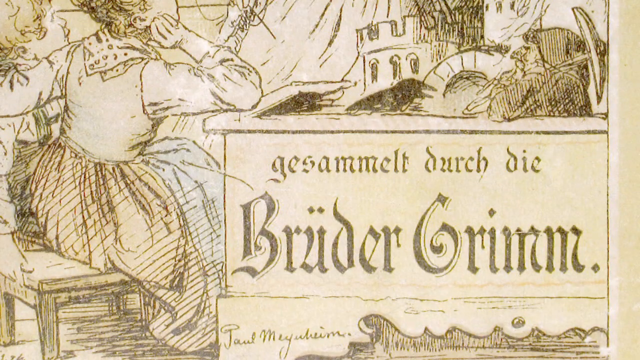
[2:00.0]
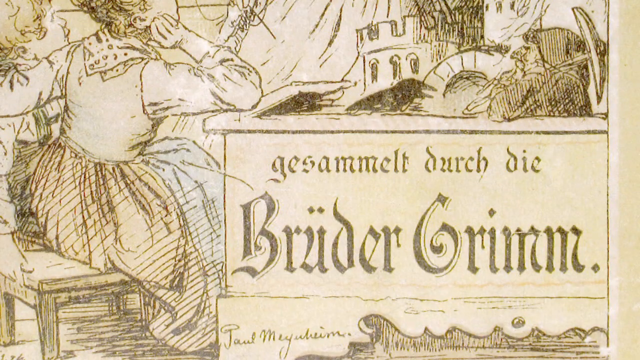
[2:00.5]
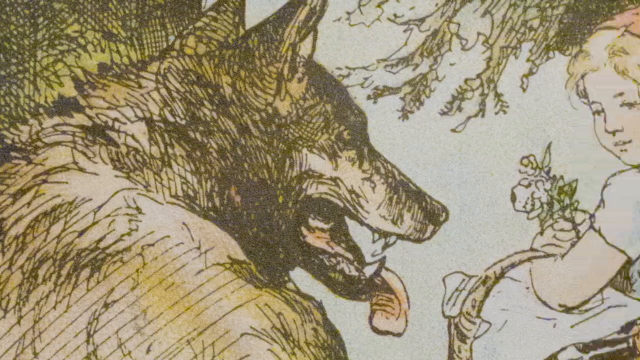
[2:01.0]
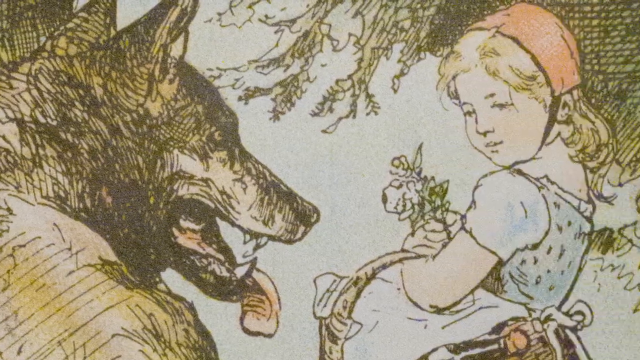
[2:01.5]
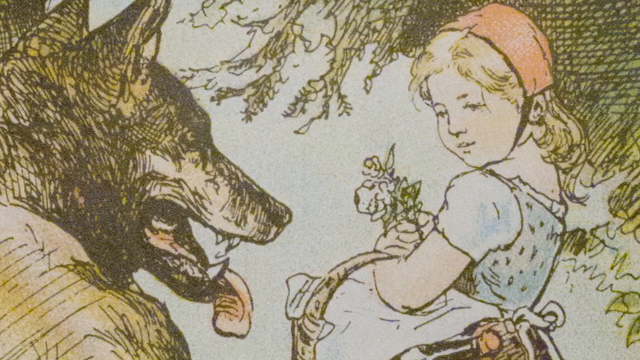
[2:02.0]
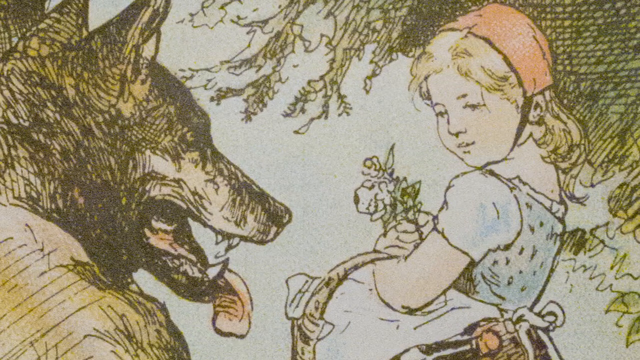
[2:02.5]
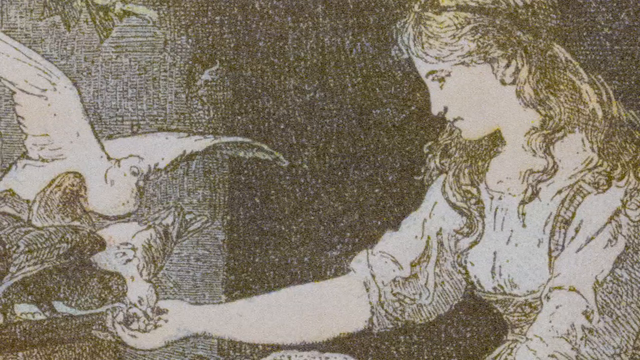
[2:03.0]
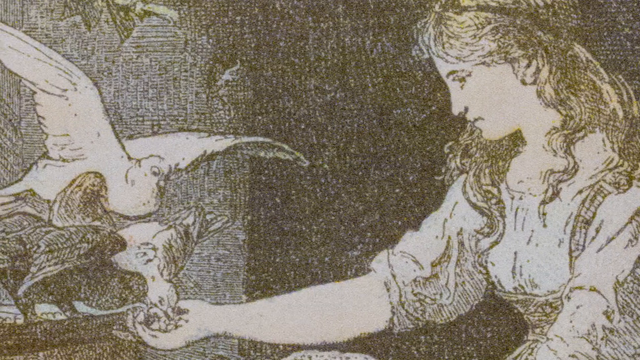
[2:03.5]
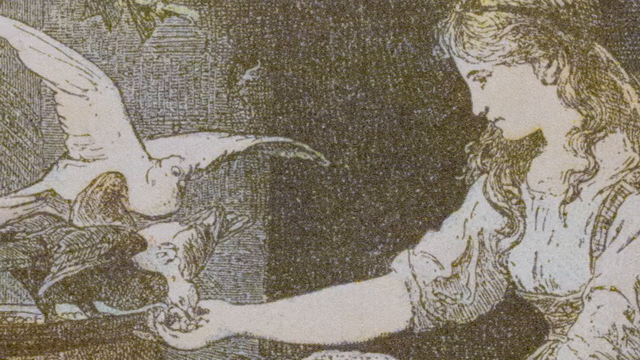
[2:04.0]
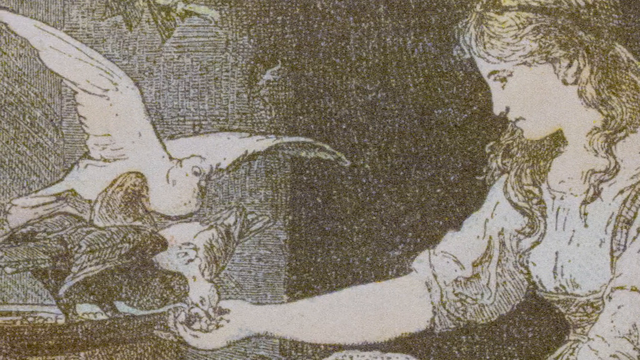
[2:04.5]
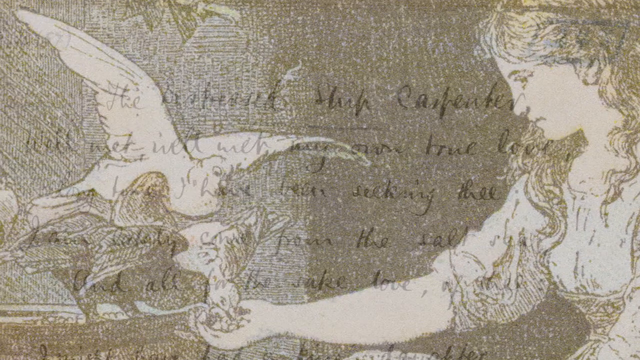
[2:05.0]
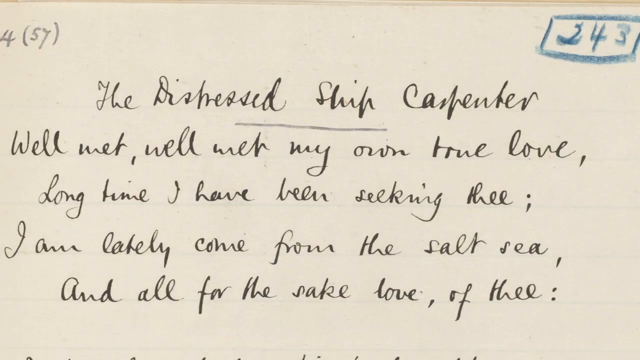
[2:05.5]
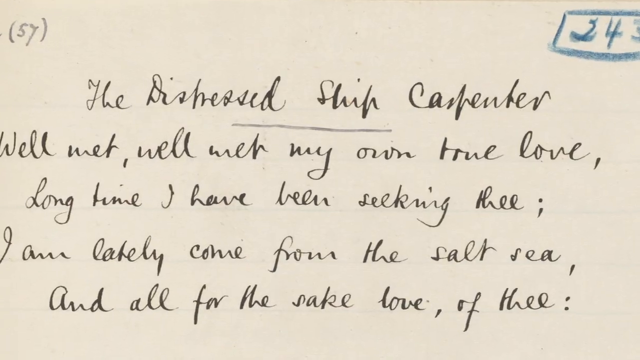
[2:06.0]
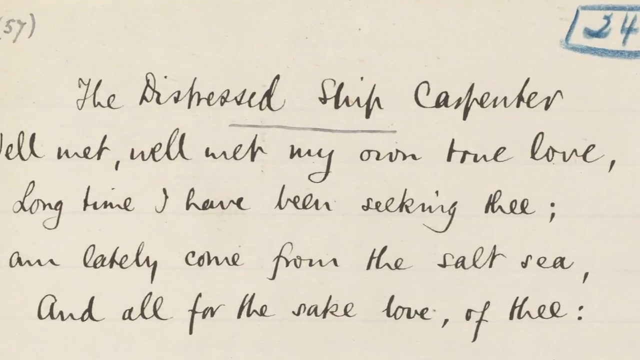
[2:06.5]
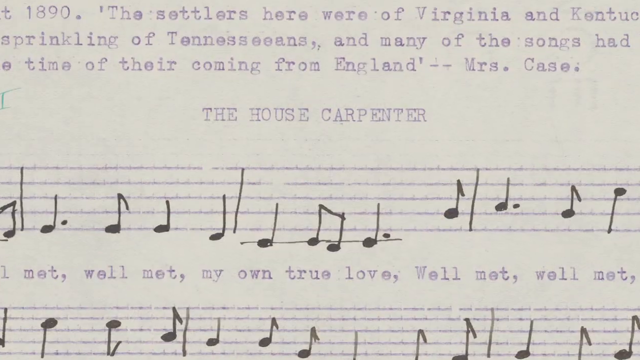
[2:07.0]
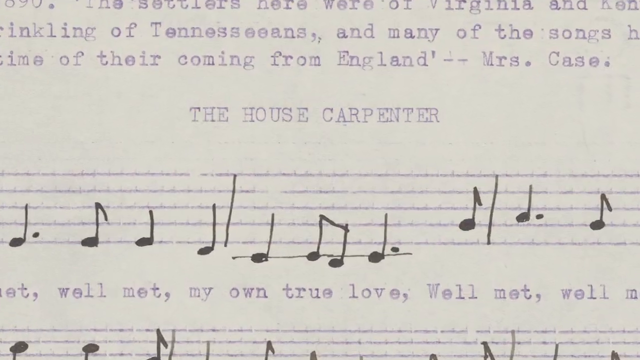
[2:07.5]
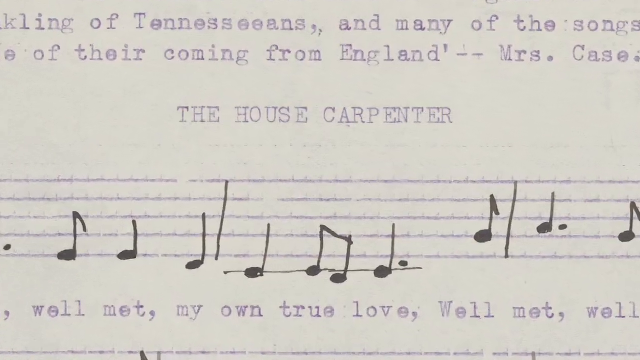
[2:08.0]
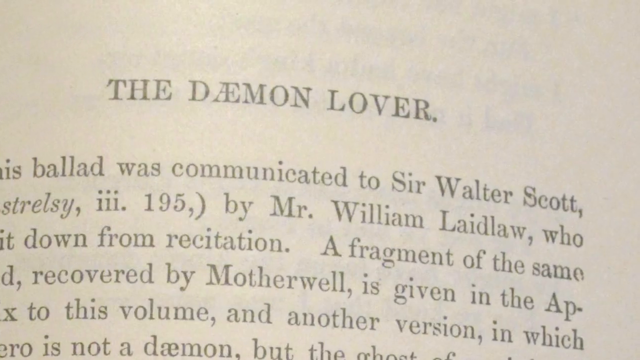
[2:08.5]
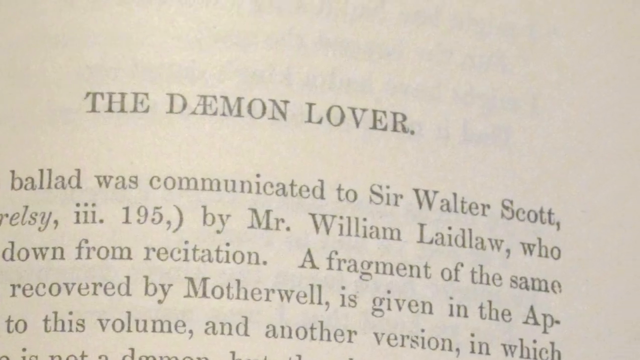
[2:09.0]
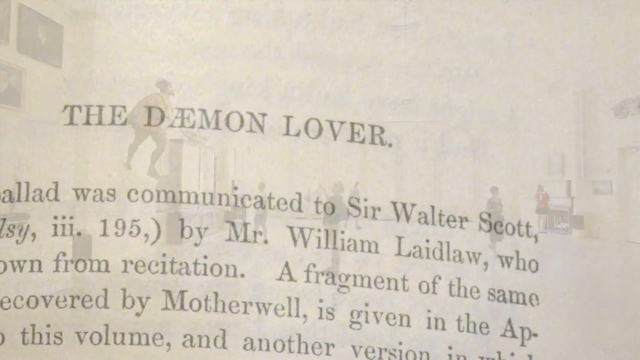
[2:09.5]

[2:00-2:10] The apparent children's book shows "grim" in the bottom right; there are three words at the top and two at the bottom, the last being "grim." Illustrated drawings show children on the left-hand side with their backs to the viewer and what looks like a little troll in the upper right holding a pickaxe. The video cuts to what appears to be Little Red Riding Hood, with the wolf on the left and Little Red Riding Hood on the right. The wolf looks at her, snarling; she wears a red hat and a blue dress, has blonde hair, holds some flowers, and looks at the wolf. After a quick cut to something else, more of the house carpenter and the demon lover material appears, followed by a very quick shot of what looks like people walking around in a museum.